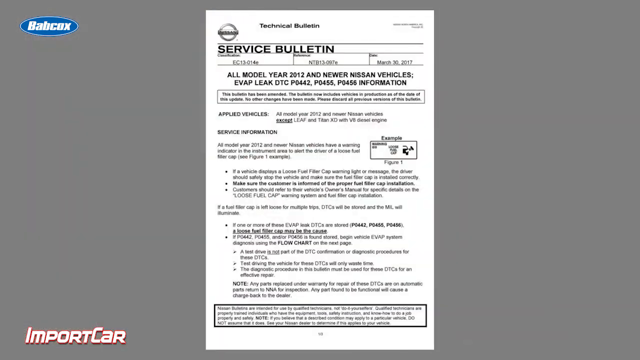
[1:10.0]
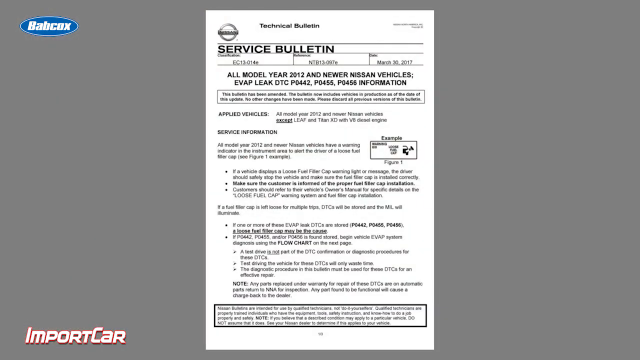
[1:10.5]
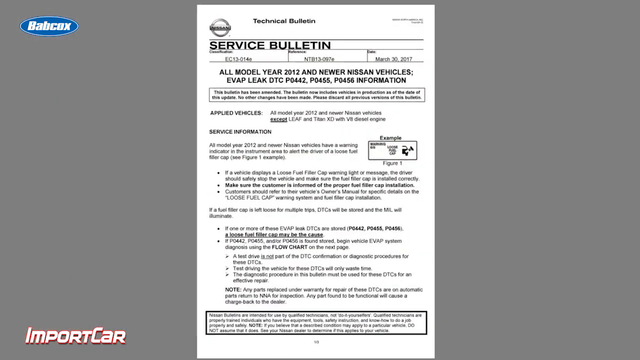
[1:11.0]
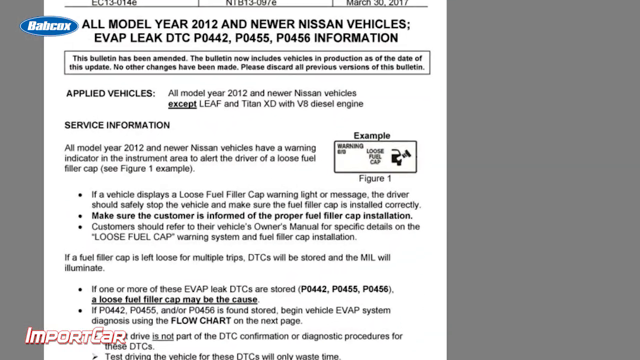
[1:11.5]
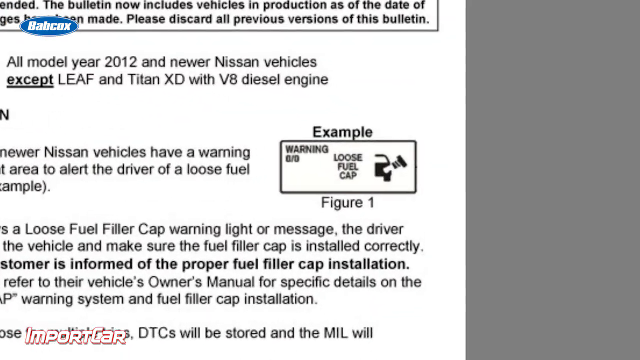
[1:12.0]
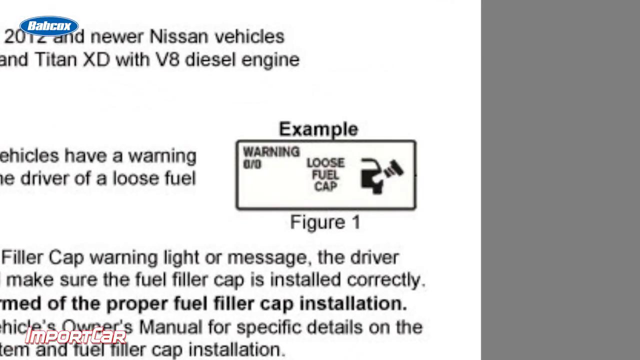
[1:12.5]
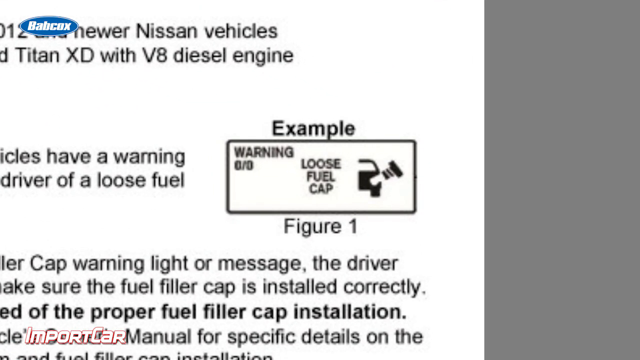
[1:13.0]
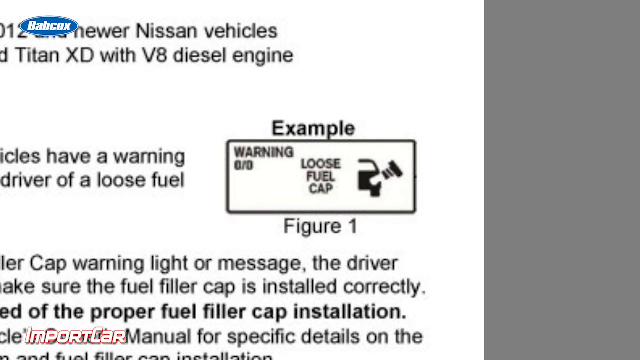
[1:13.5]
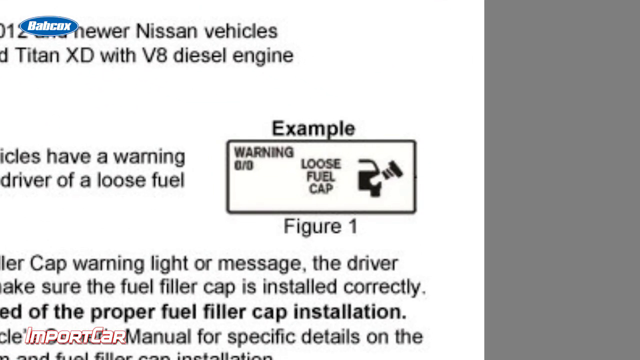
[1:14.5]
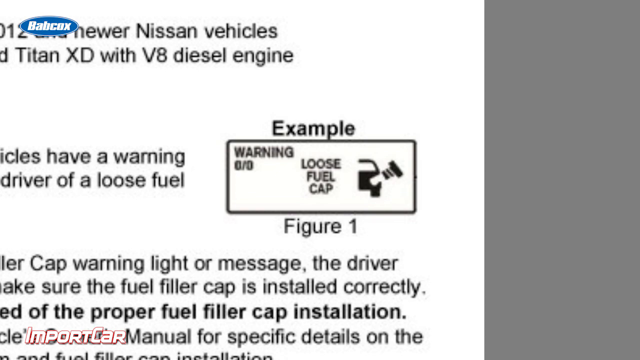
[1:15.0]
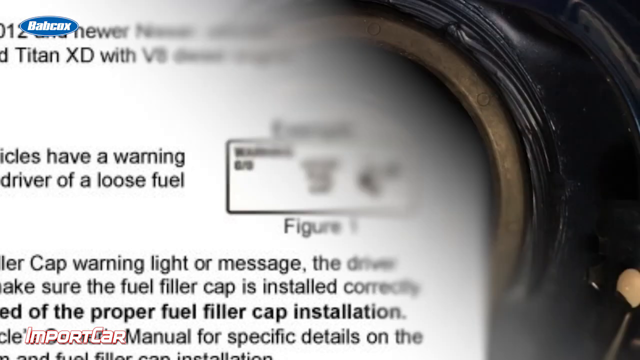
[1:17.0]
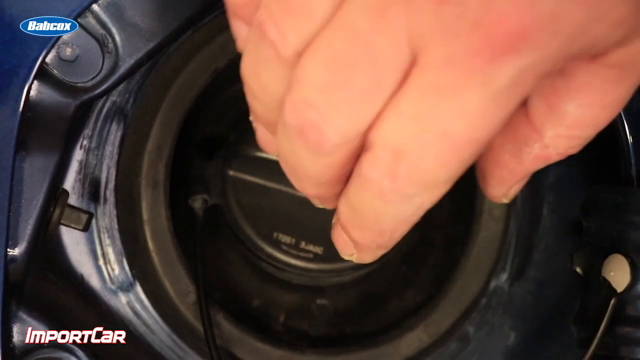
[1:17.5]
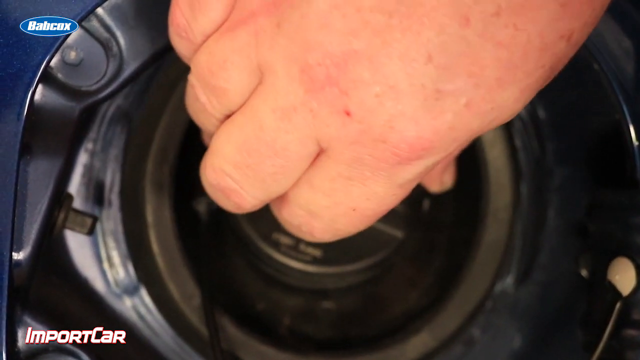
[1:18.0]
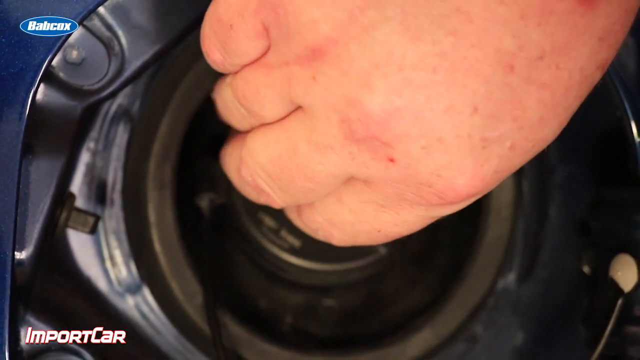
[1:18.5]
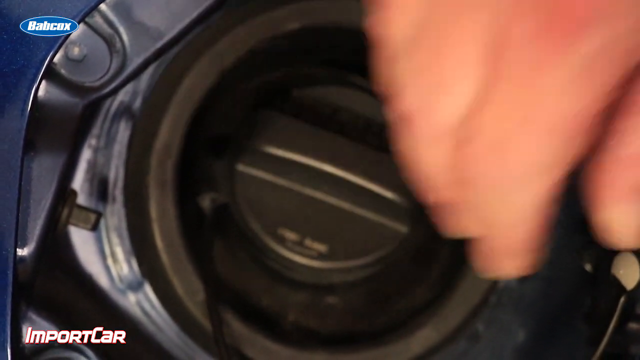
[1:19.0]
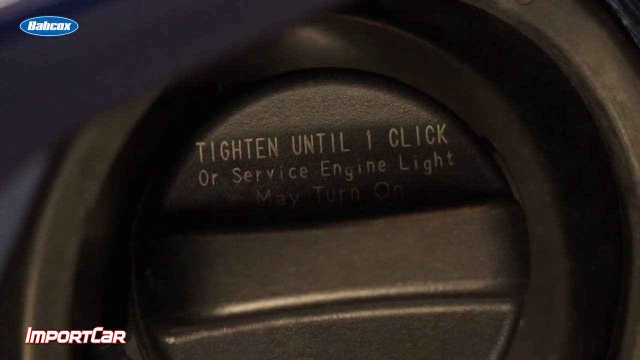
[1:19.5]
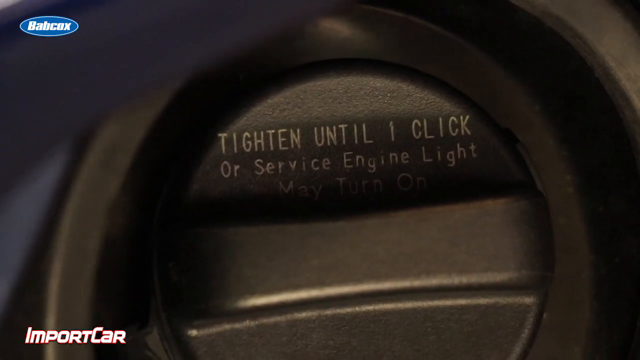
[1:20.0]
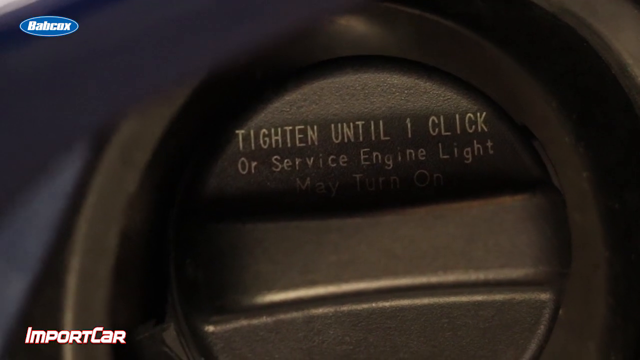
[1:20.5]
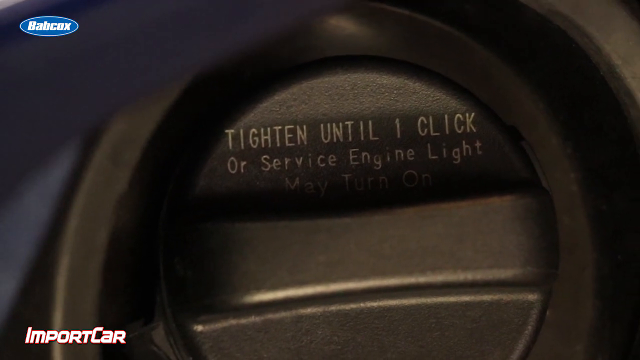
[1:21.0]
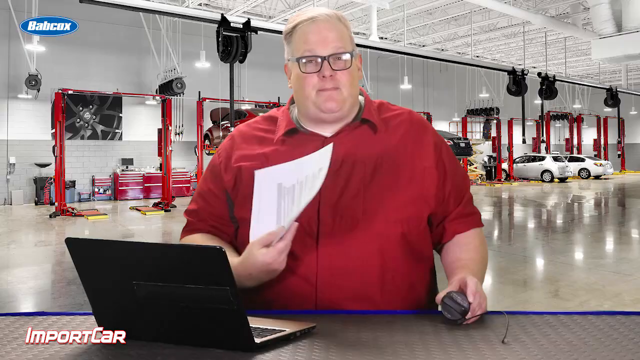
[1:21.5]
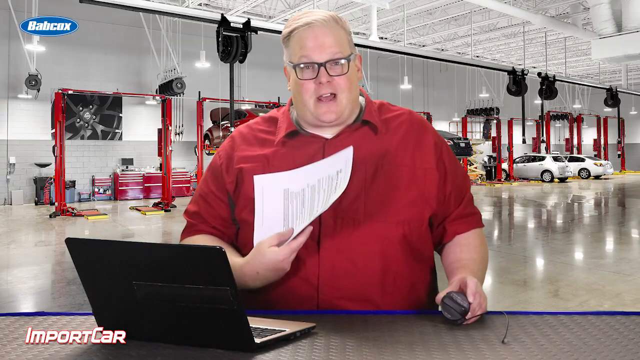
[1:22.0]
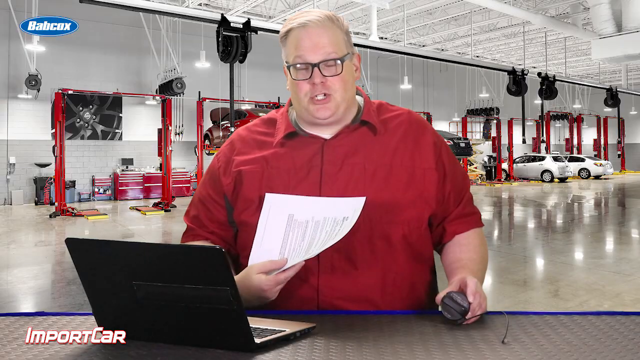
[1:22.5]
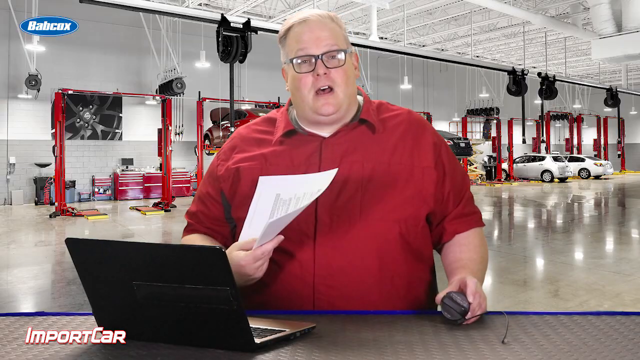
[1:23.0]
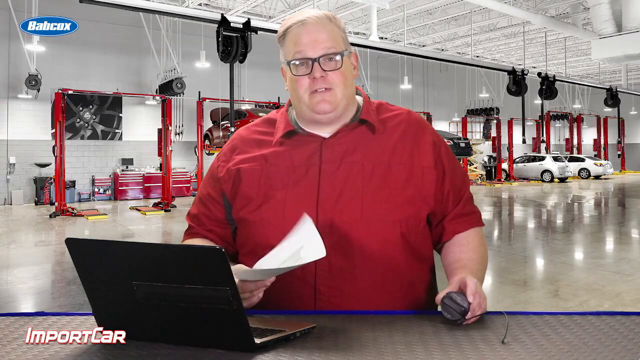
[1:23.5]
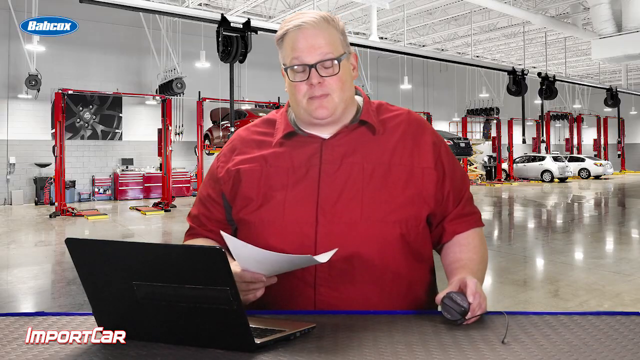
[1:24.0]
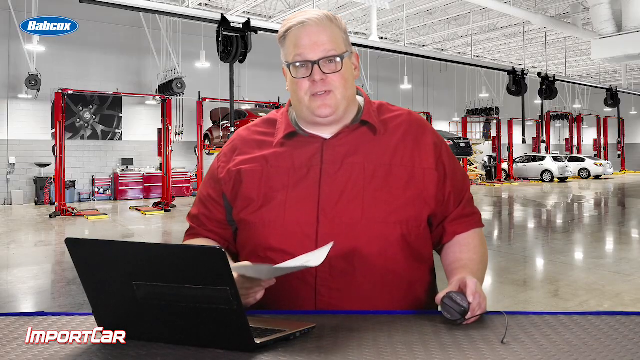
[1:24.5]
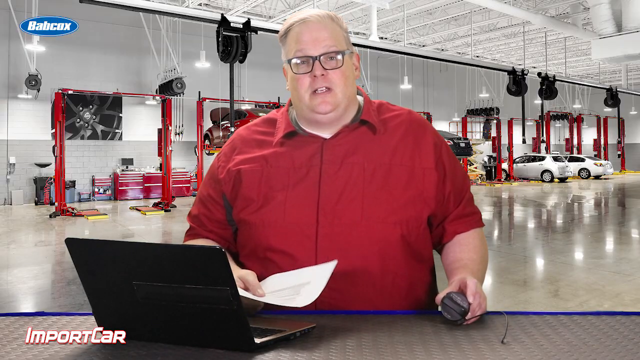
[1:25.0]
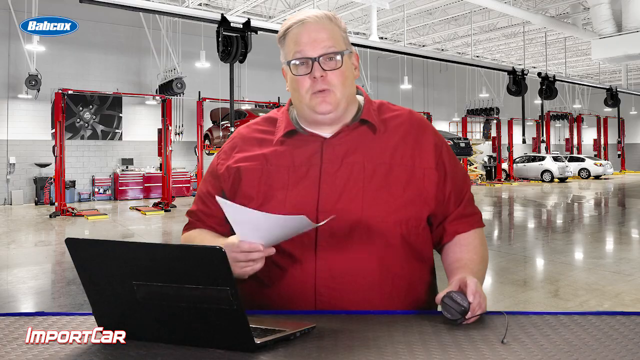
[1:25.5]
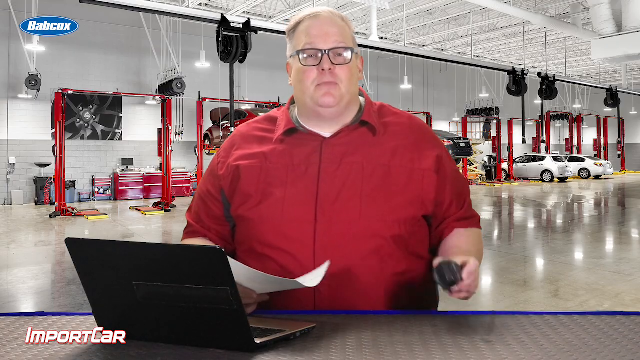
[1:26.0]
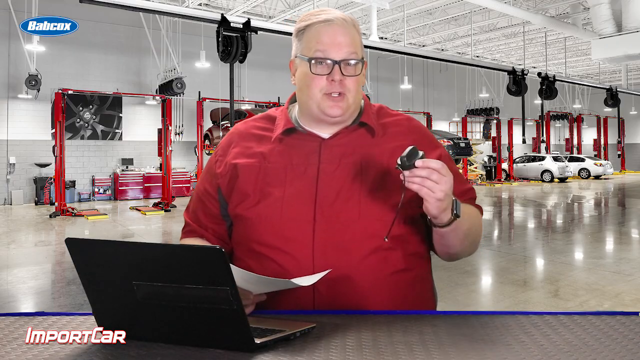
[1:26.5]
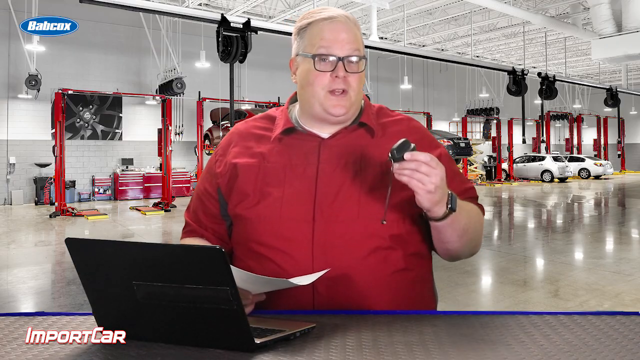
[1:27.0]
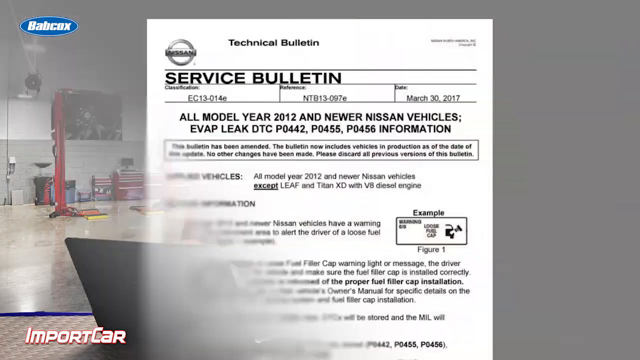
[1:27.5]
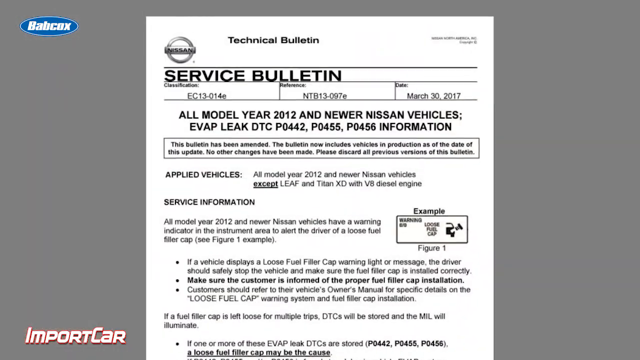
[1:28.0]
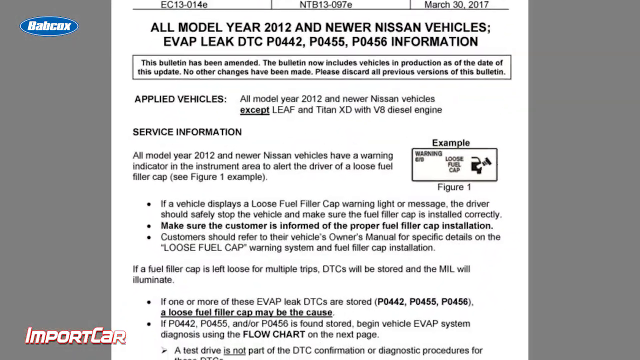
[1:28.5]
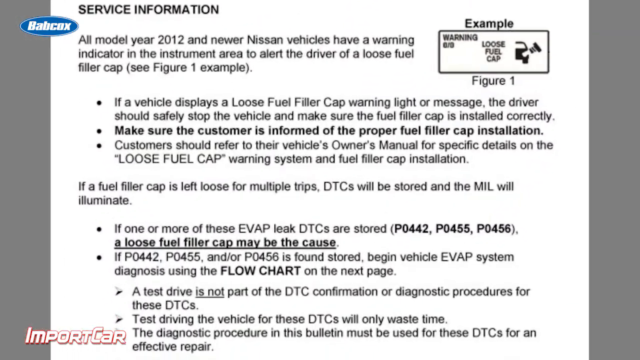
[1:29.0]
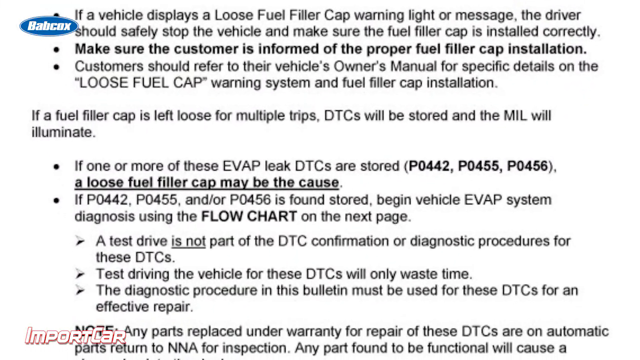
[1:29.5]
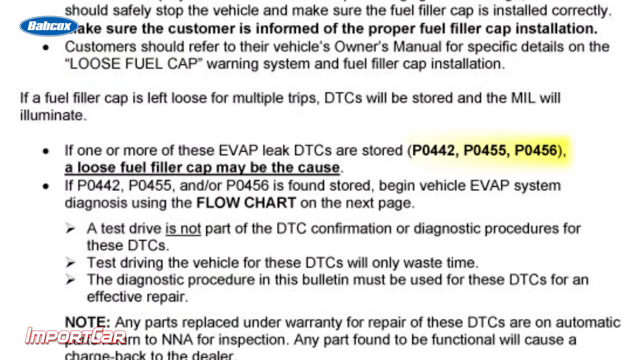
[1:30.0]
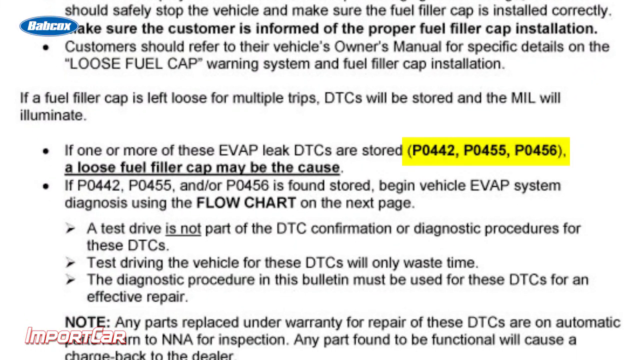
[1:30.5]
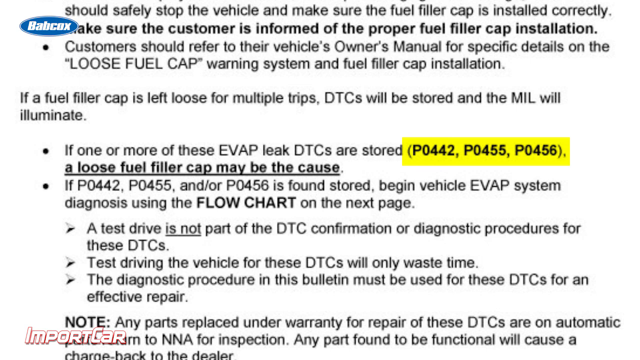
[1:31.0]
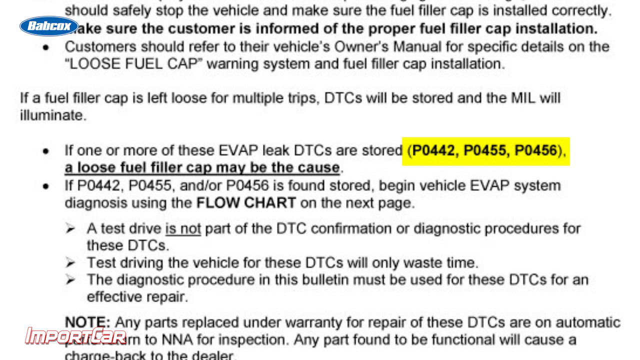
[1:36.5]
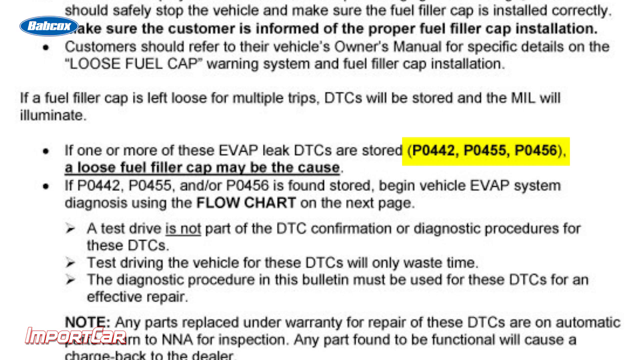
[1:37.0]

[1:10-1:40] The service bulletin from Nissan is shown, directed at all model years 2012 and newer Nissan vehicles and concerning the EVAP leak. The shot closes in on a warning about a loose fuel cap and a photo showing one click as the way to close the gas cap securely. Farther down, the bulletin lists which POs might be involved.